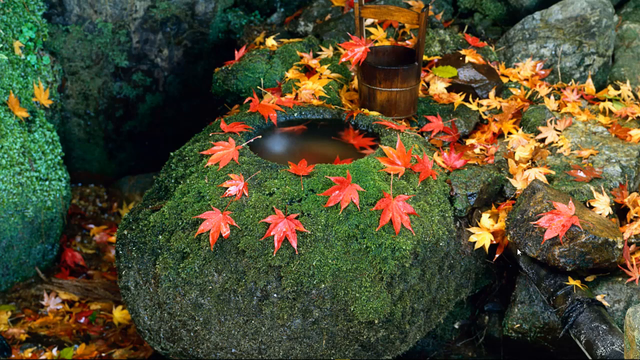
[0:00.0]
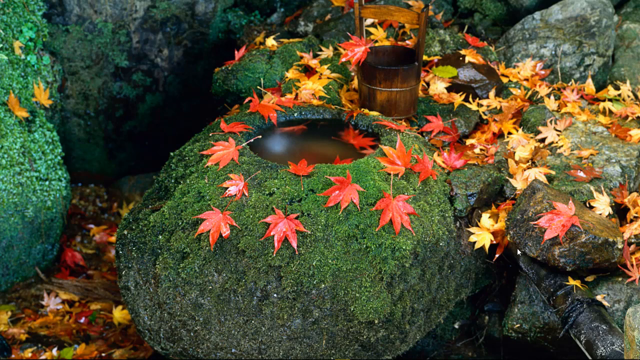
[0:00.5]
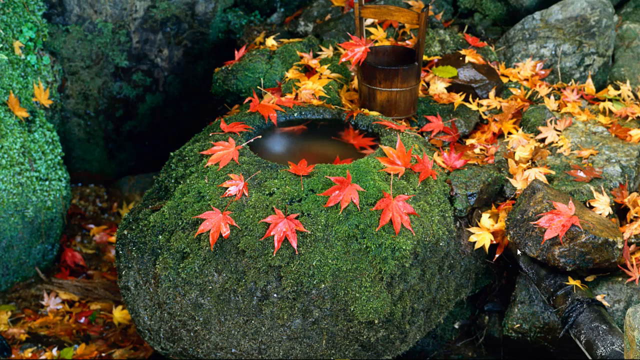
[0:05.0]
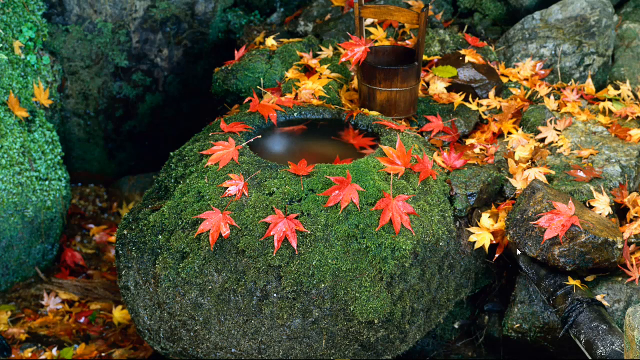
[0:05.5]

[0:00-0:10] Rocks fill the whole screen, appearing to have algae growing on them, with red, orange and yellow fall leaves on them as well. Something like a wooden bucket is in the middle. One of the rocks seems to have a hole in the middle, with what seems to be somewhat brown water inside it. For the most part the rocks are a sort of gray and green, because of what looks like algae growing on them.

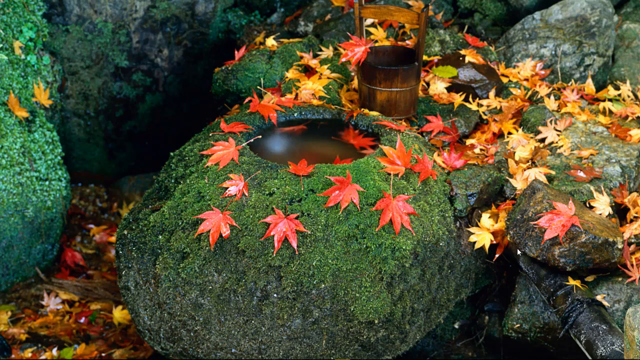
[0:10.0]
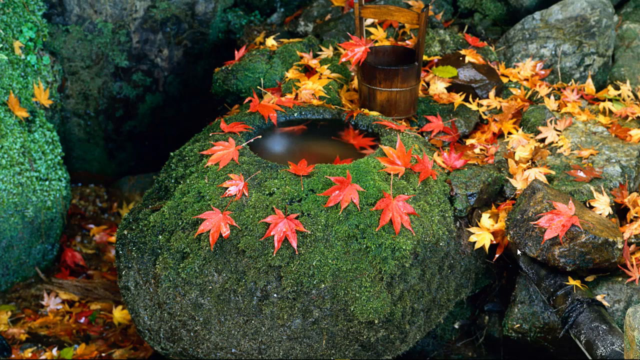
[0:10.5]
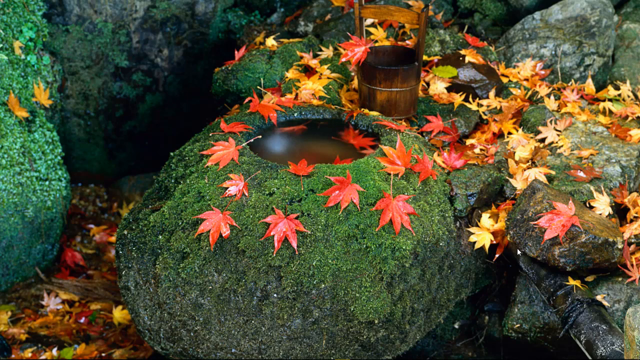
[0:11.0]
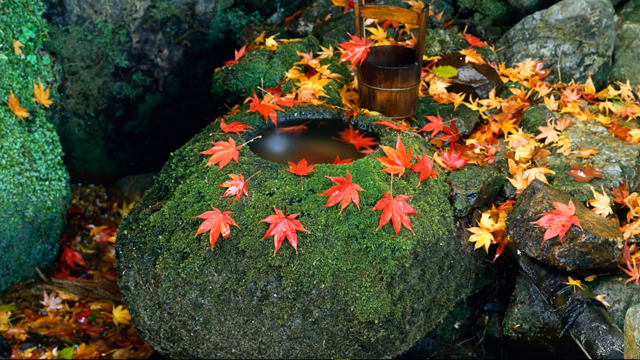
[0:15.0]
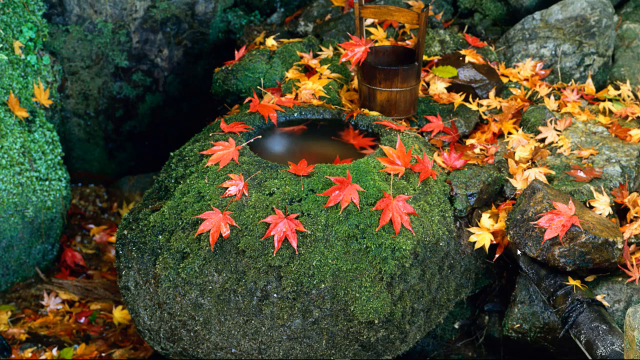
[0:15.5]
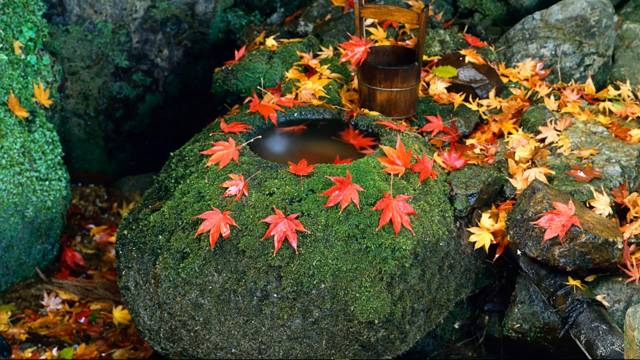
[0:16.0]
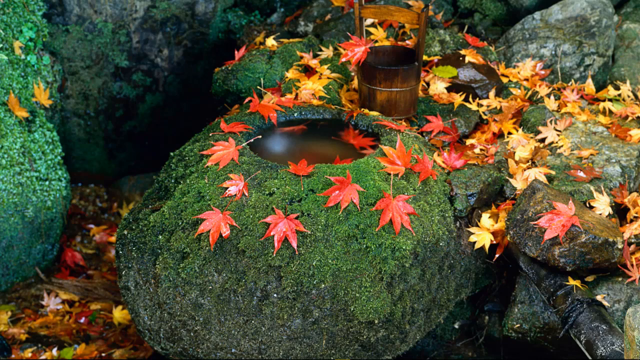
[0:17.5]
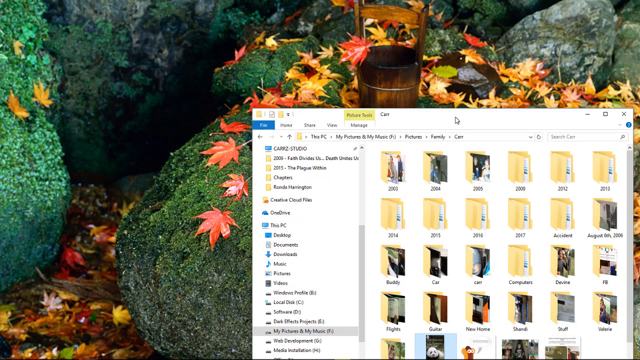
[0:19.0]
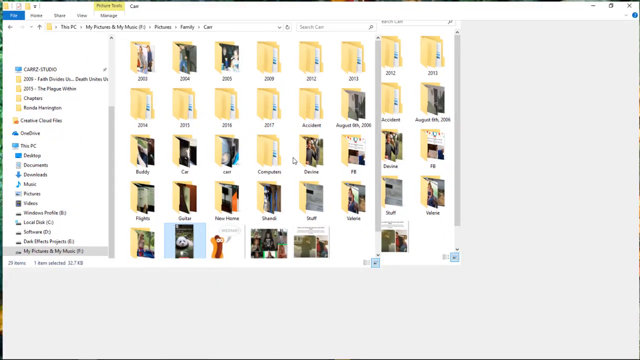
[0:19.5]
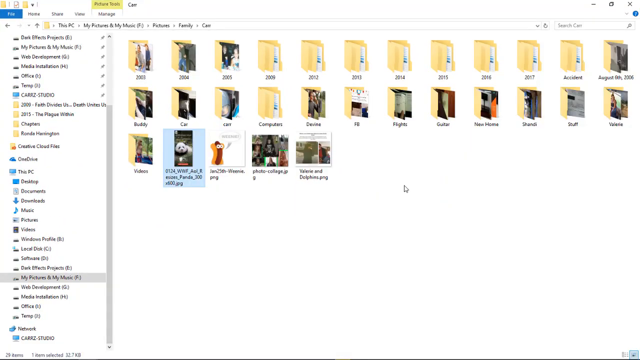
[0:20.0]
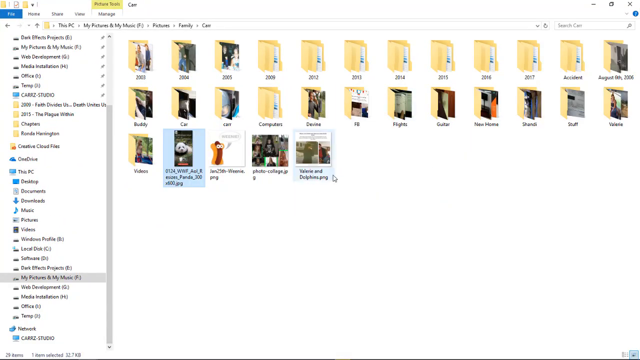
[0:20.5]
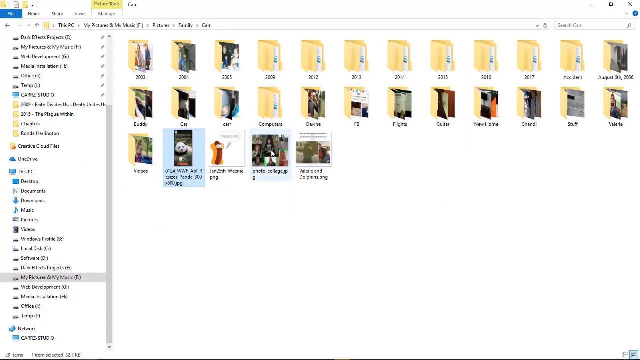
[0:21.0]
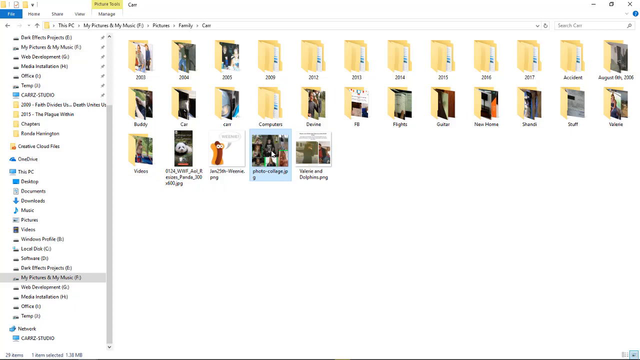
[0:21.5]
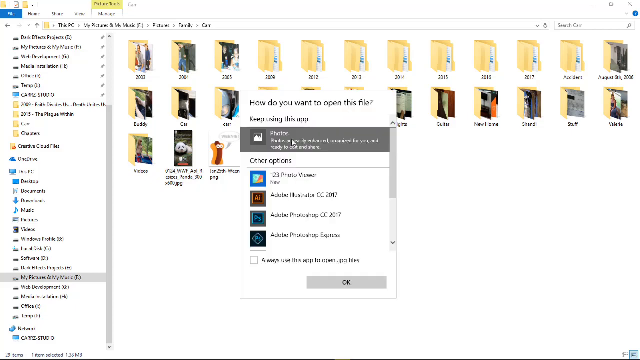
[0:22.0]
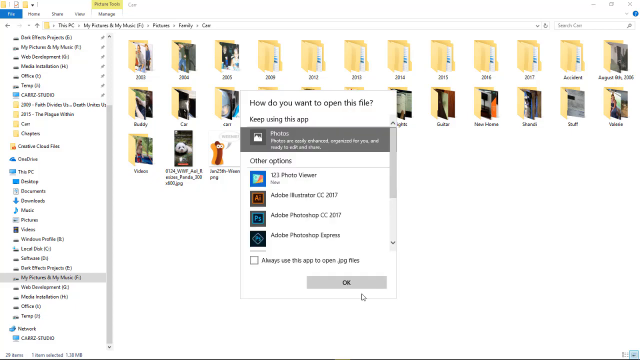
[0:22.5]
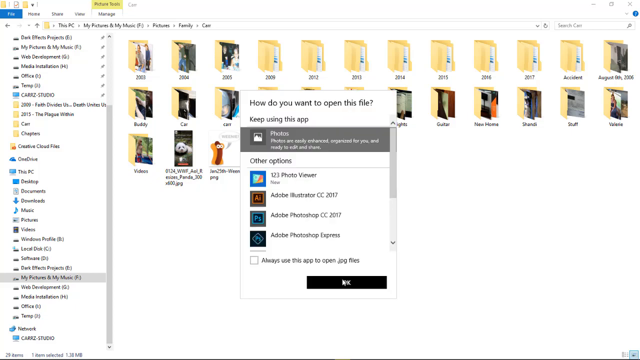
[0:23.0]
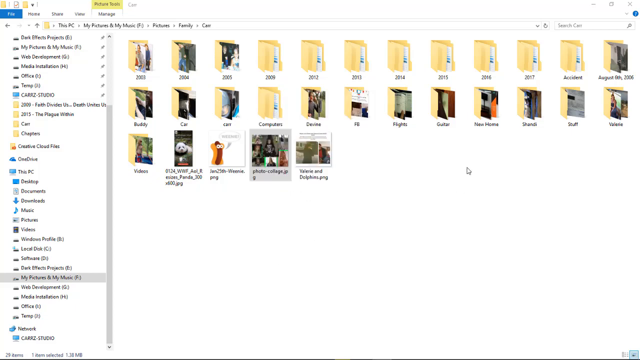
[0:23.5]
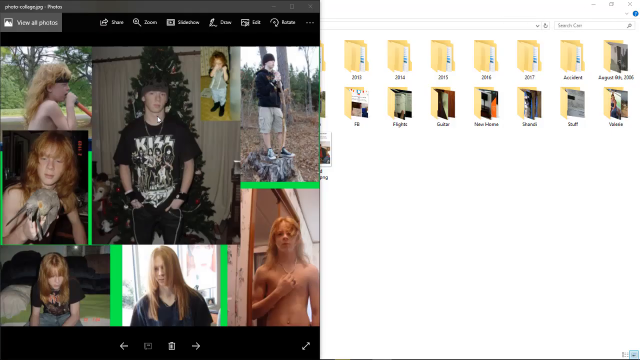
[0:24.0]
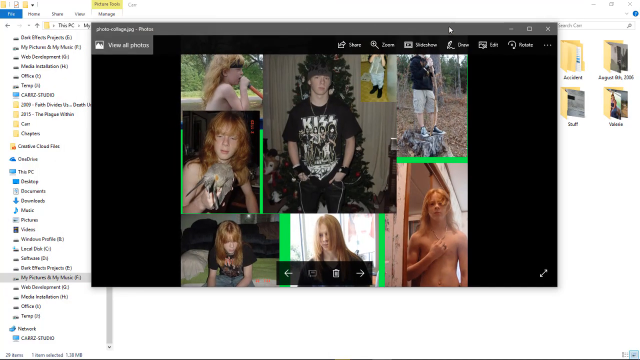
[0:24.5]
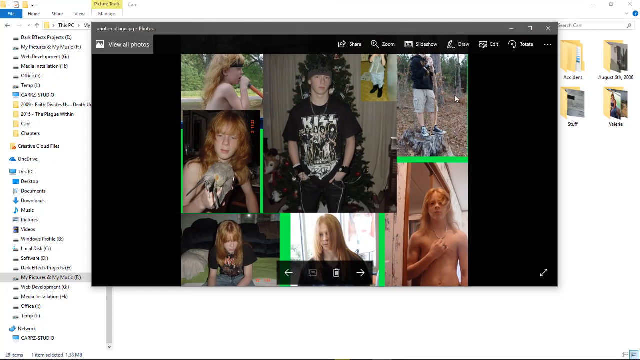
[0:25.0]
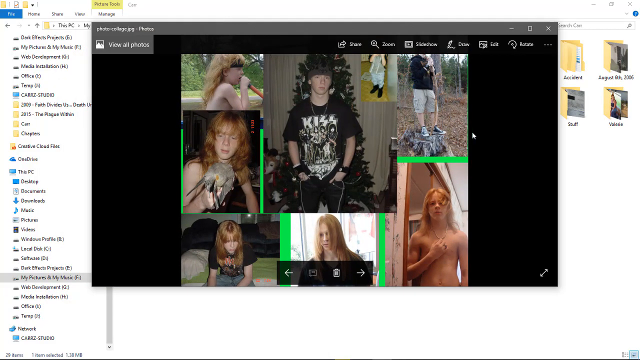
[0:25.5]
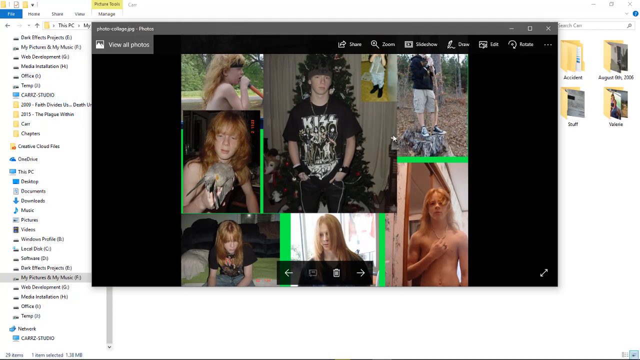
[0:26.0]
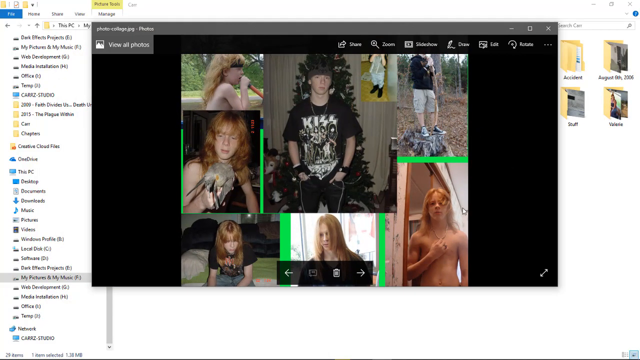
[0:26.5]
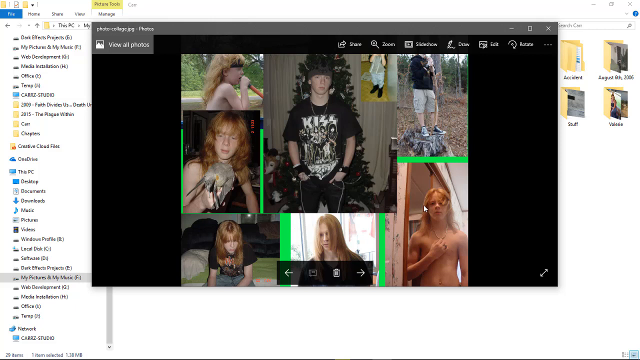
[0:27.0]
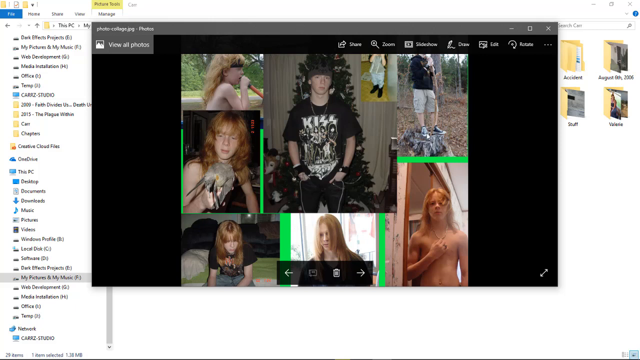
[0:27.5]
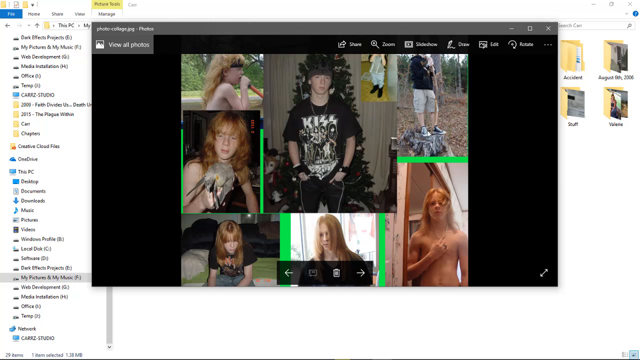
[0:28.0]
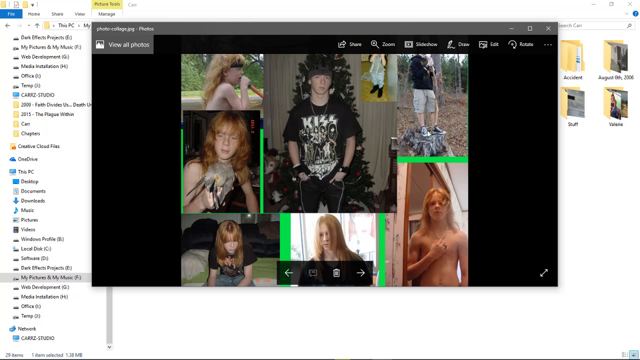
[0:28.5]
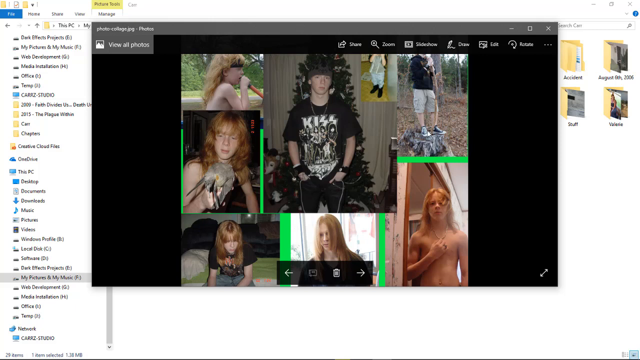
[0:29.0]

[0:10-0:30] A bunch of rocks appear to be covered in algae, and on top of them a whole bunch of leaves, seemingly fall or autumn leaves in red, orange and yellow, are scattered all over. A wooden bucket seems to be placed on one of the rocks. The rocks are mostly green on top, and one rock has a hole in it with brown water. This seems to be a wallpaper on someone's computer: a window flies up, showing a whole bunch of manila folders. The person seems to select a folder containing photographs, and a window pops up with a whole bunch of photographs of a person, seemingly arranged like a collage.